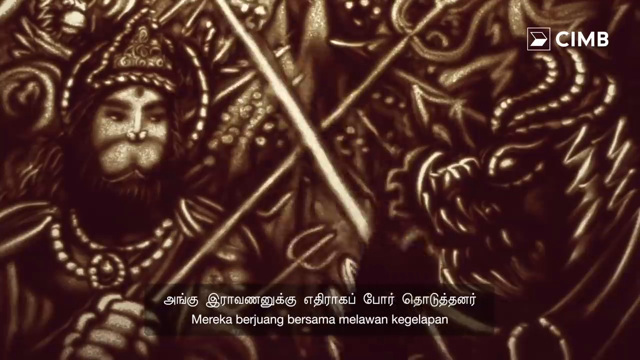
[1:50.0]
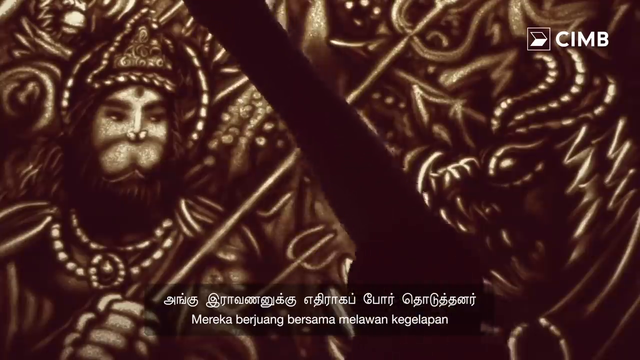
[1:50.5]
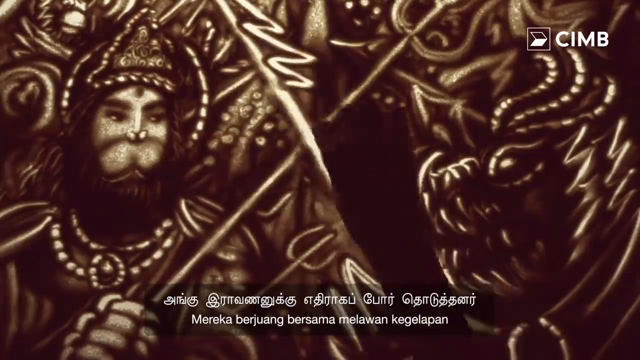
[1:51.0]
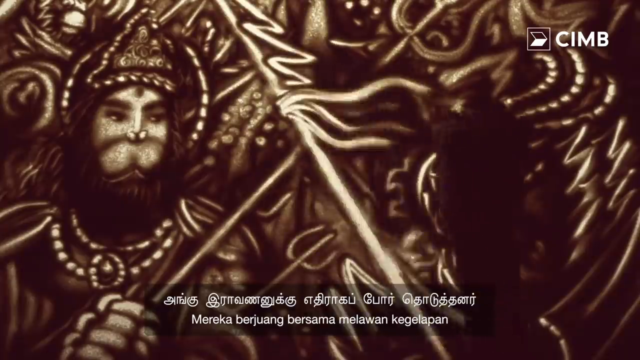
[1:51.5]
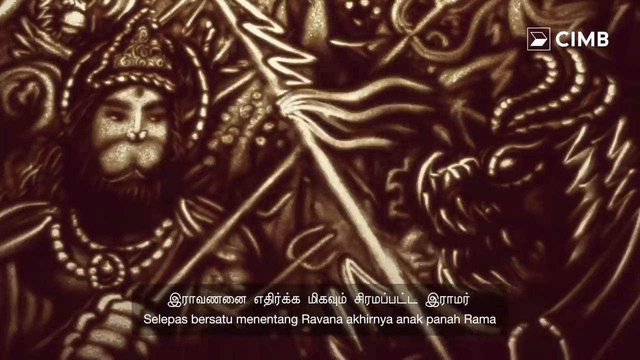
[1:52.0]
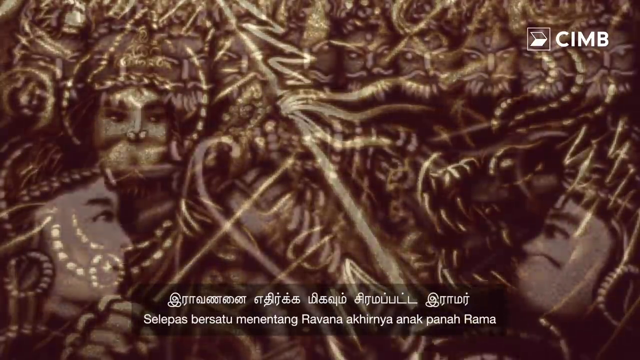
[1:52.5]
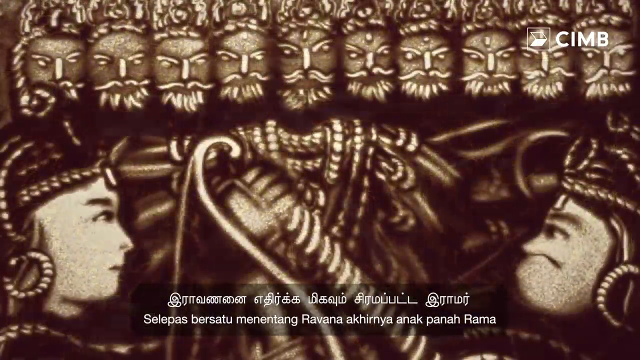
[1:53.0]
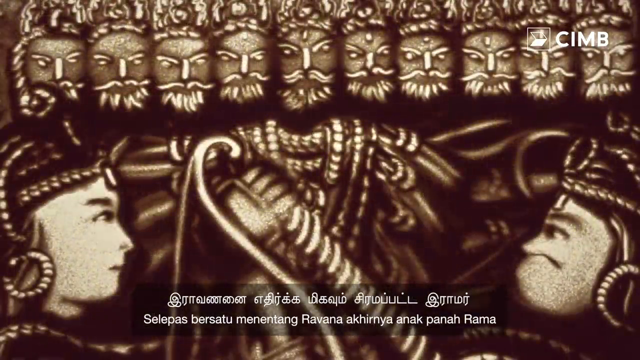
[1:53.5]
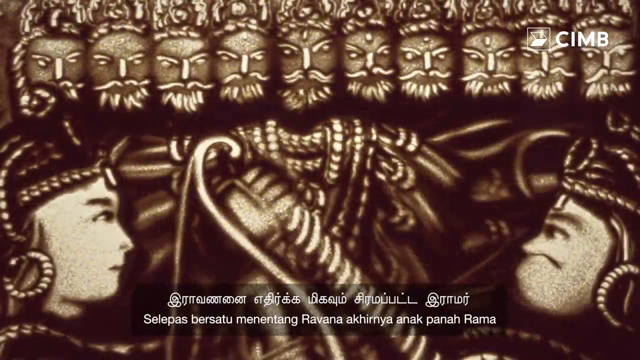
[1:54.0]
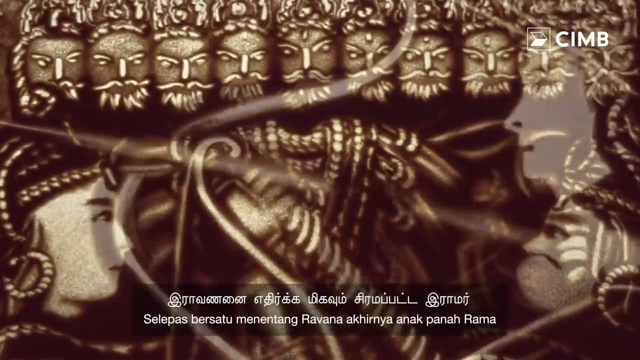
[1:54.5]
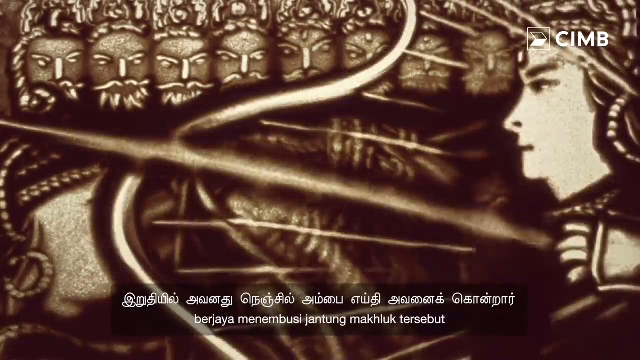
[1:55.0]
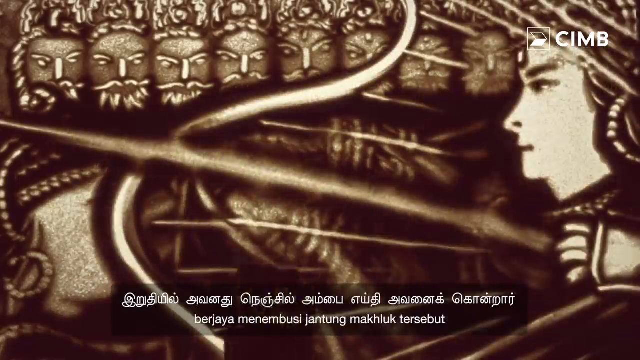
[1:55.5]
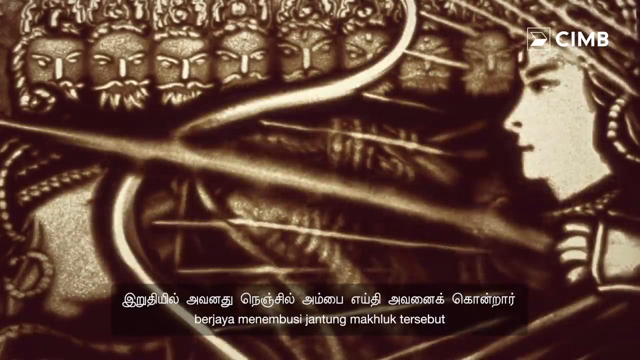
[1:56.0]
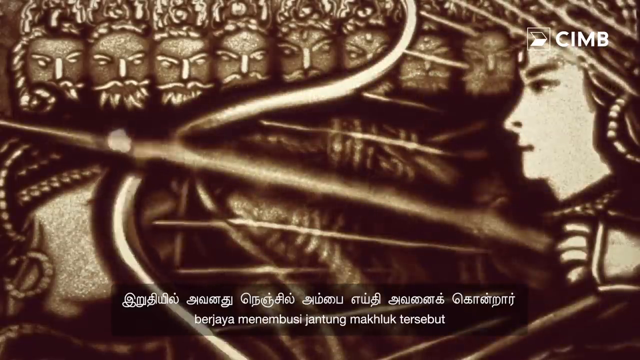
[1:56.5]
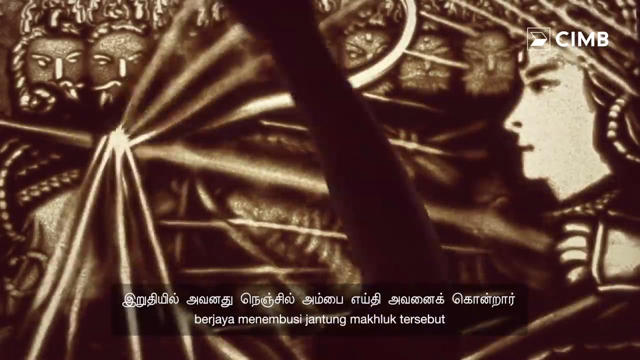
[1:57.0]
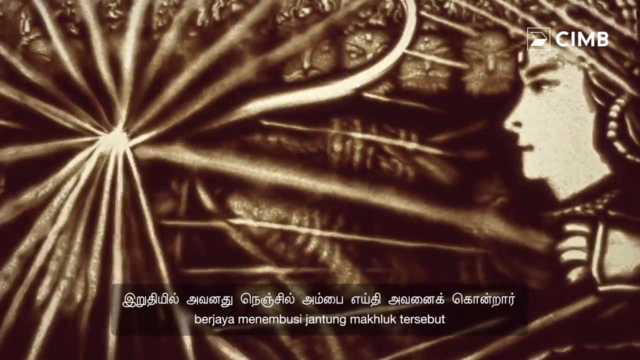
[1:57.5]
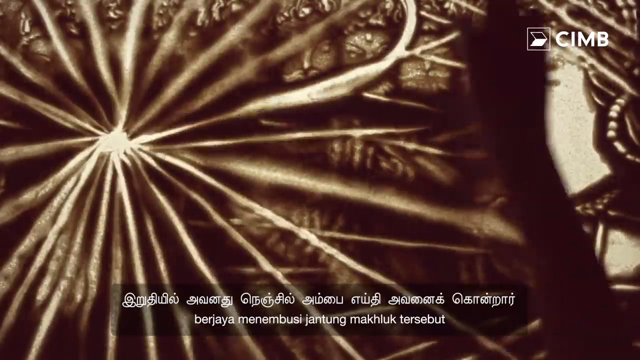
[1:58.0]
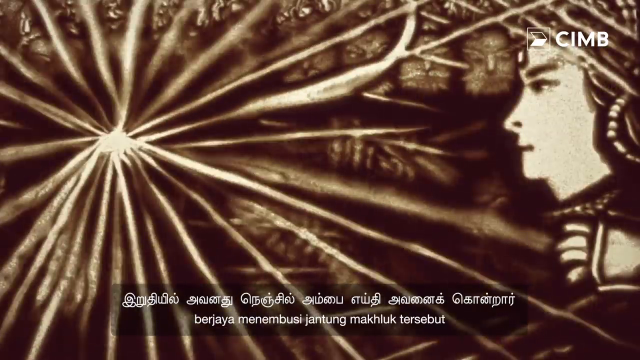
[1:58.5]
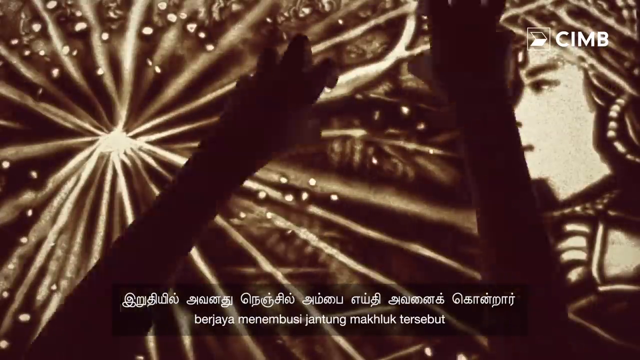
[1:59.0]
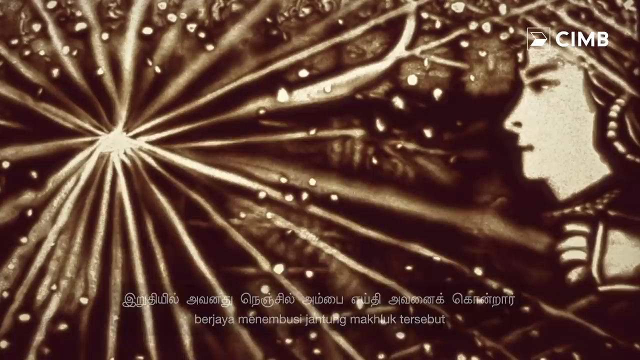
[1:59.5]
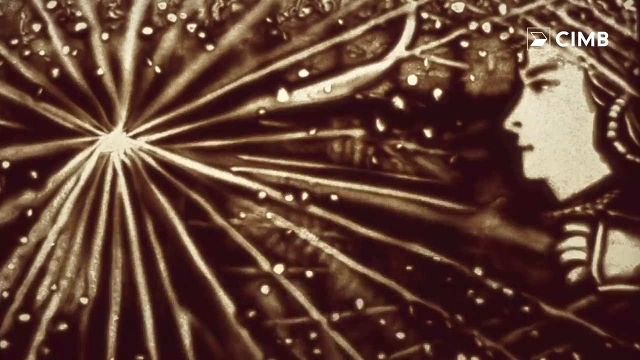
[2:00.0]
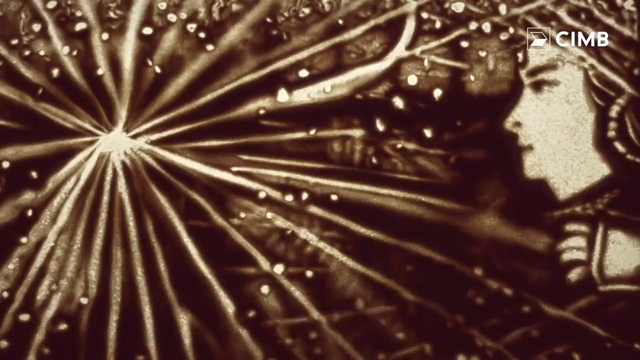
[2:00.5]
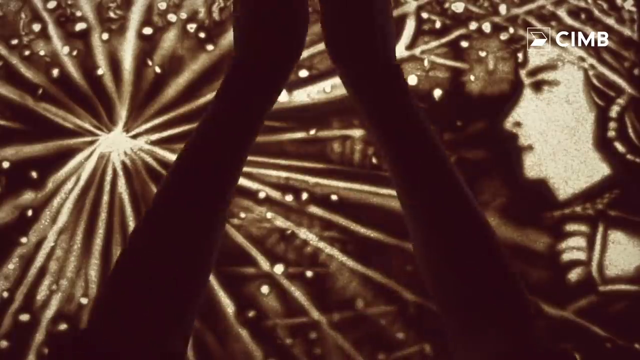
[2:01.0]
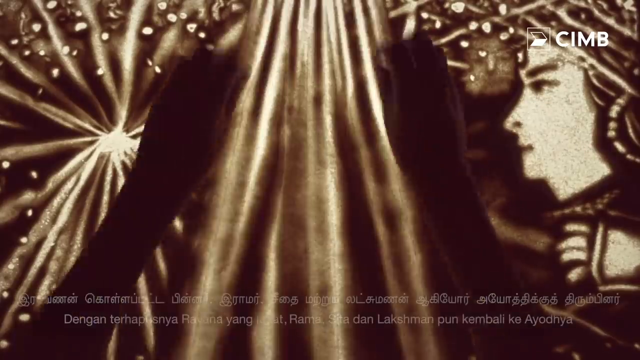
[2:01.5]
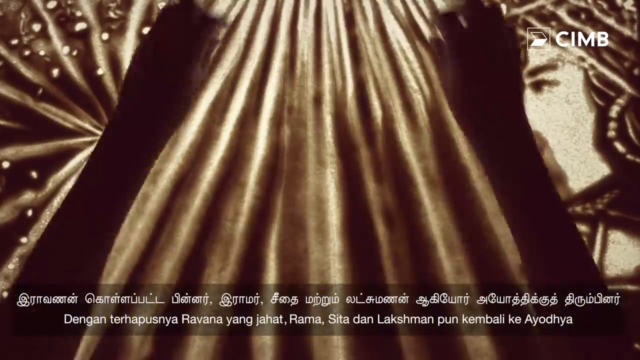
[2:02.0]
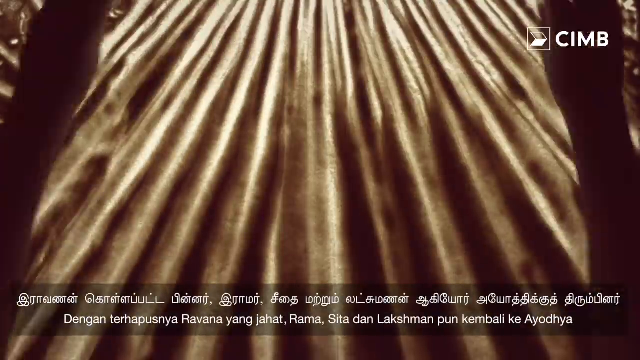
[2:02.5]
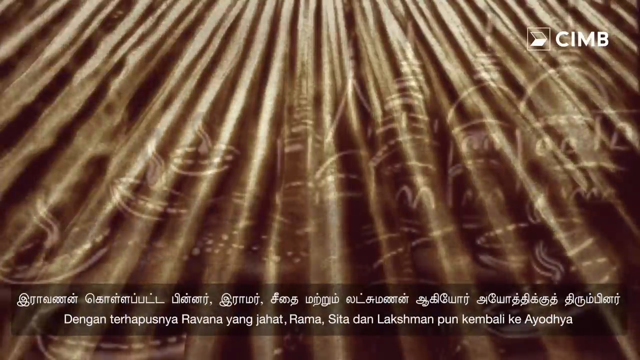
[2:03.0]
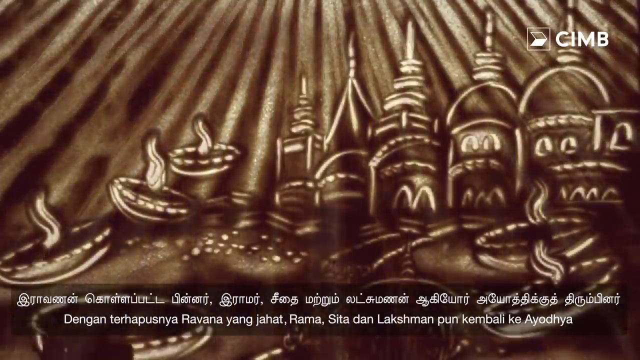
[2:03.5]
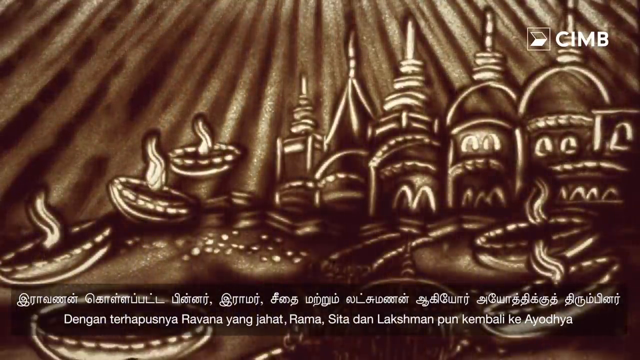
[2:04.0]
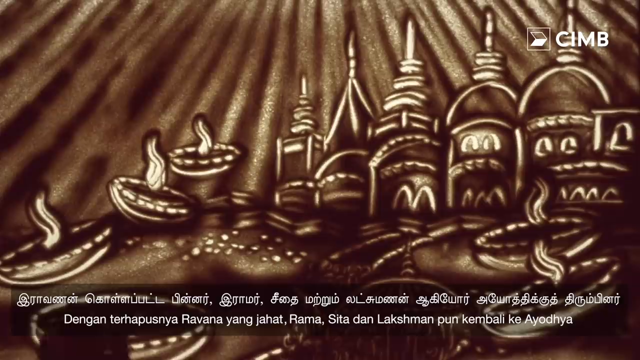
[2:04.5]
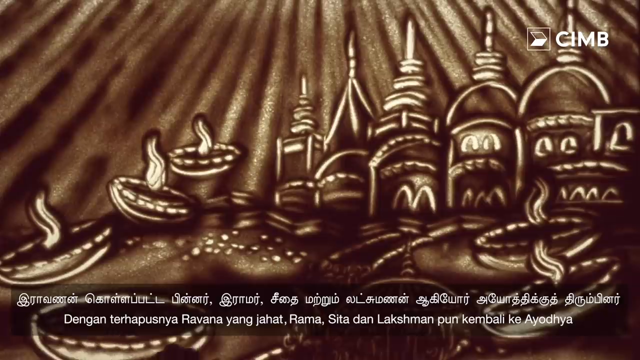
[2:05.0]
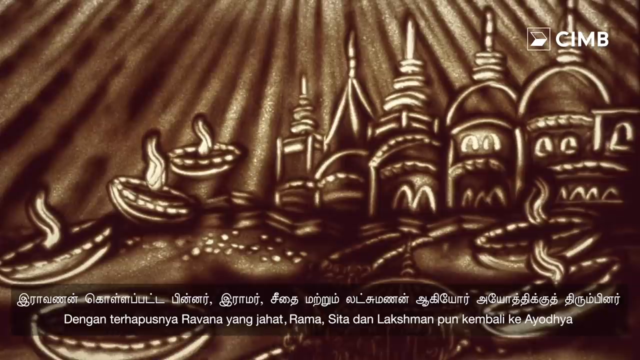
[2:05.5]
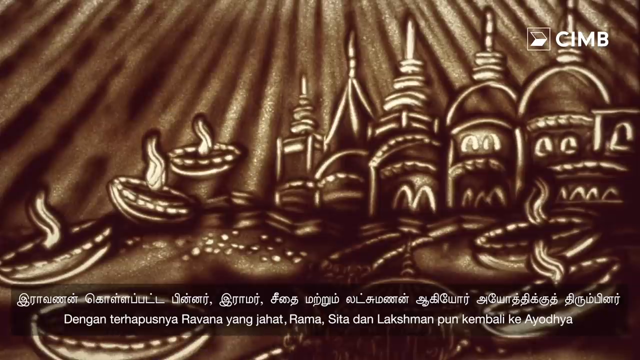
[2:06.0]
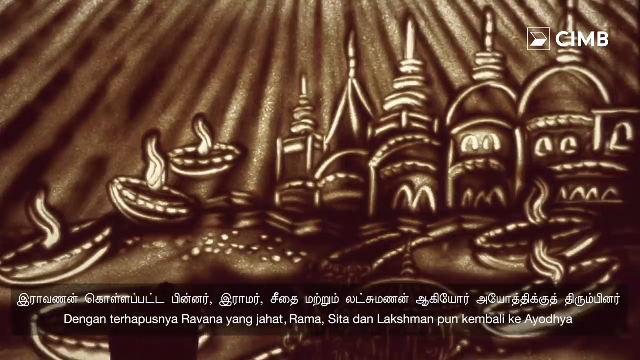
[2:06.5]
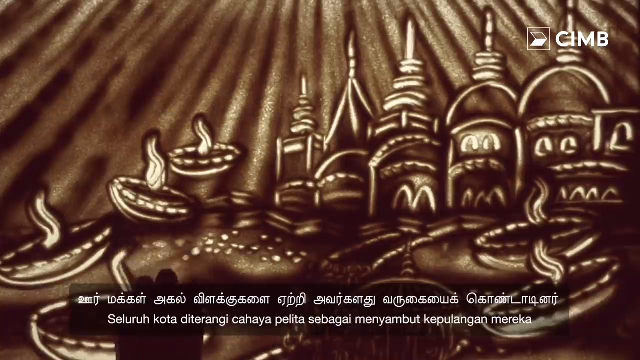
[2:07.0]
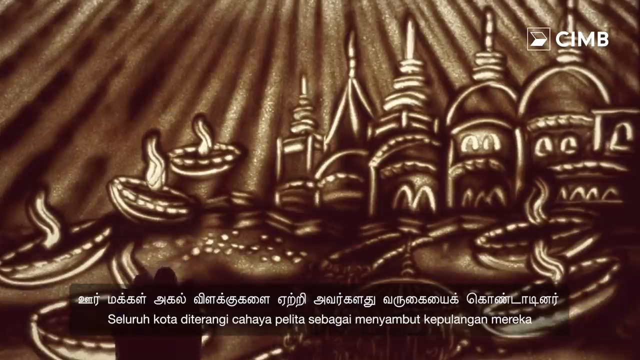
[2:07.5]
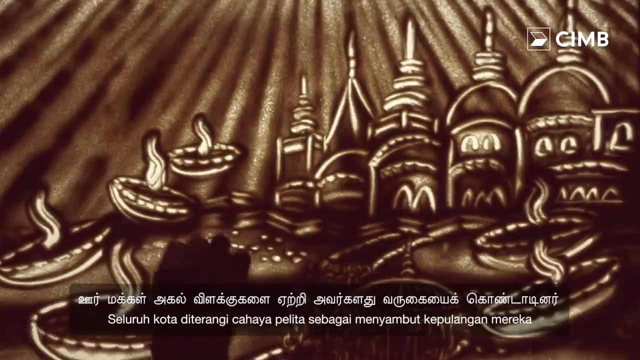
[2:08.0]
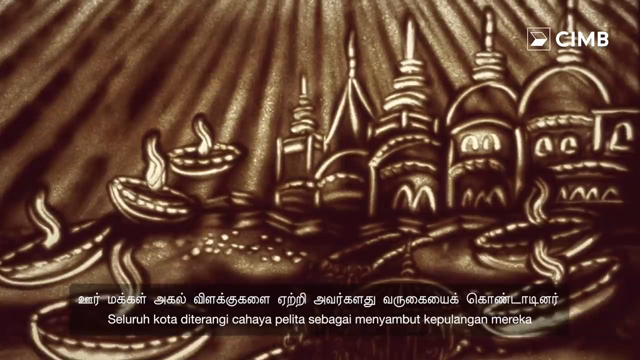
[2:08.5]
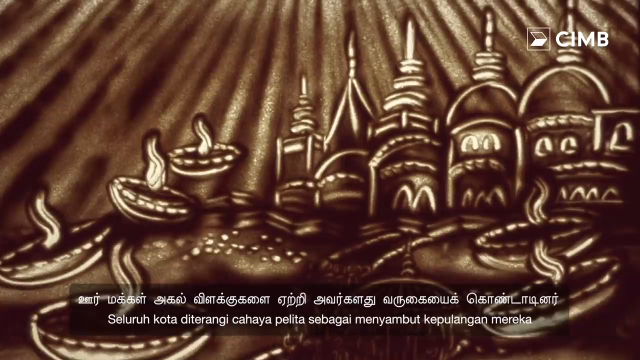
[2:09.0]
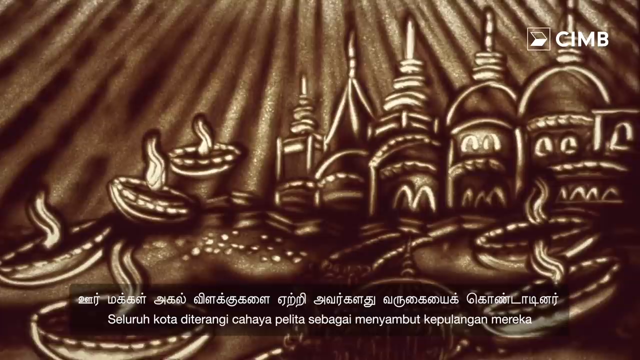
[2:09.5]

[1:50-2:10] A person's arm moves in fast speed, drawing squiggles into the sand artwork right down the center of the piece, while the human and cat-like individual is still visible to the left. The artwork with the multiple king faces appears: the faces are aligned across the top of the screen, each showing a man with an angry look, a mustache, a beard, and a crown. There are ten of these faces. Below them are side profiles of a woman on the left and, on the right, a person whose gender is difficult to tell. Someone then draws over this image, creating different lines and designs, with a side profile of a person remaining on the right. At times two hands work on the lines of the design. Finally, a small city-like scene appears, with different palaces aligned from left to right.